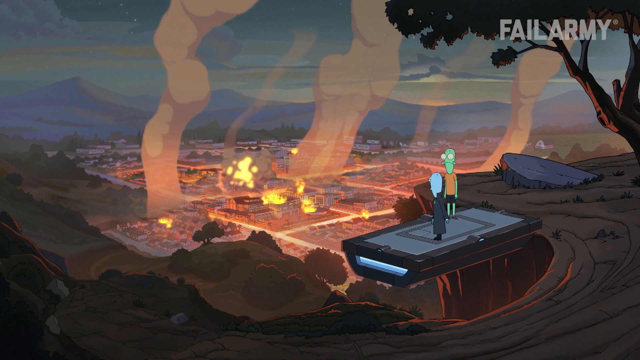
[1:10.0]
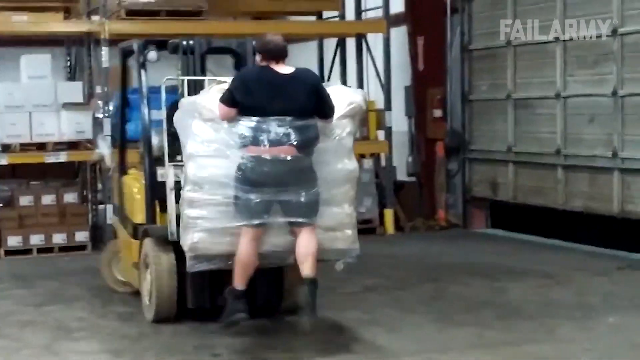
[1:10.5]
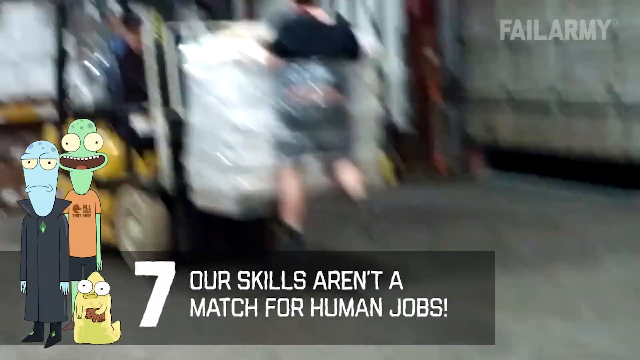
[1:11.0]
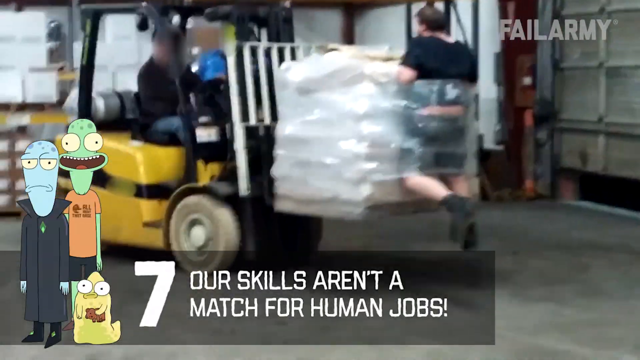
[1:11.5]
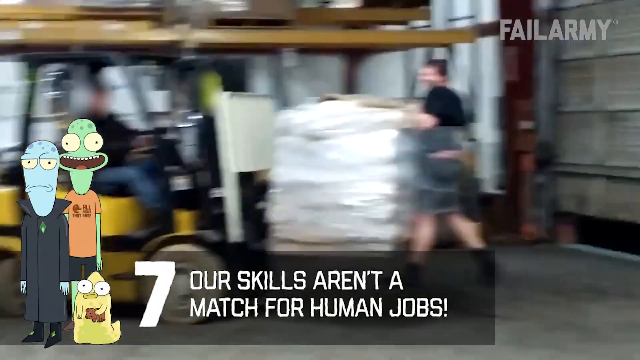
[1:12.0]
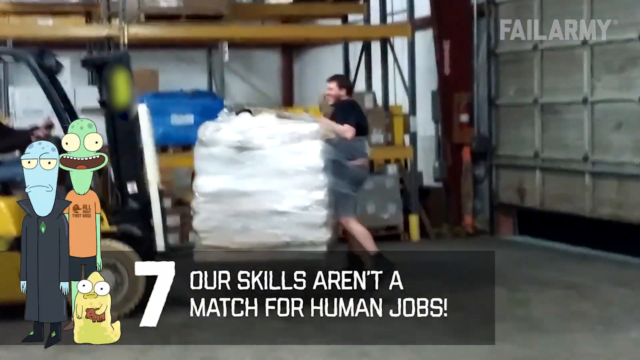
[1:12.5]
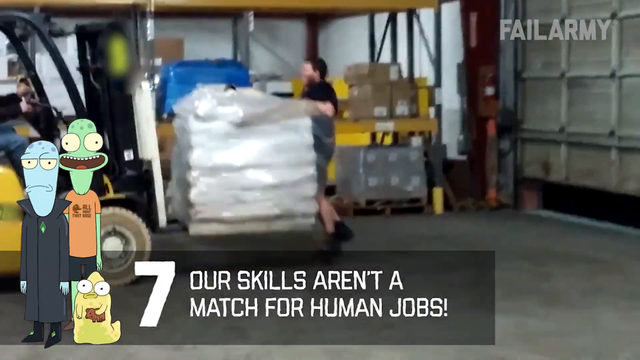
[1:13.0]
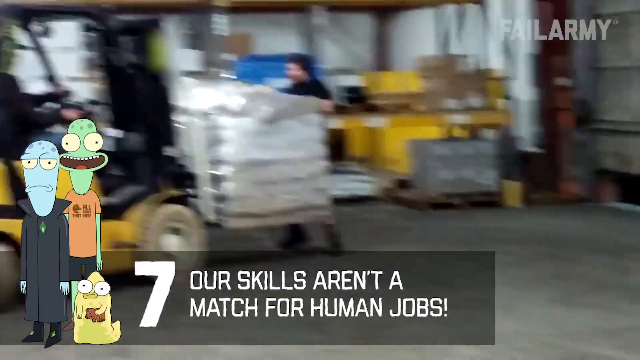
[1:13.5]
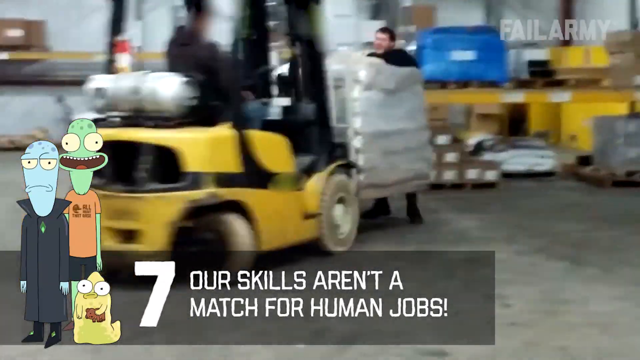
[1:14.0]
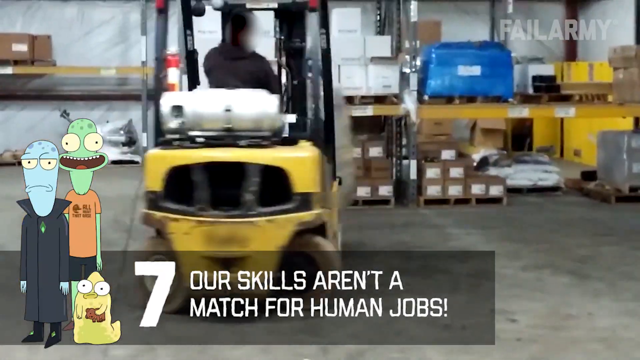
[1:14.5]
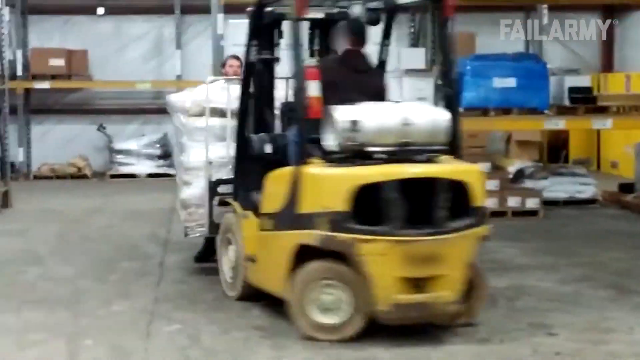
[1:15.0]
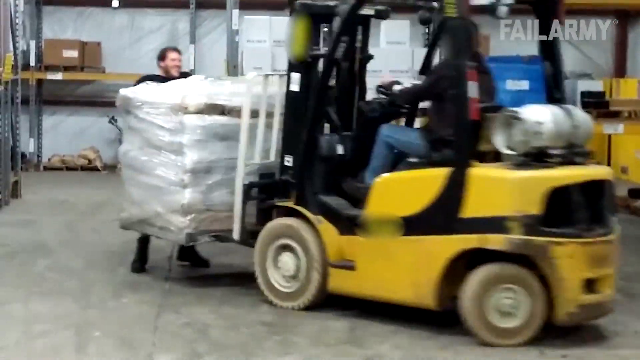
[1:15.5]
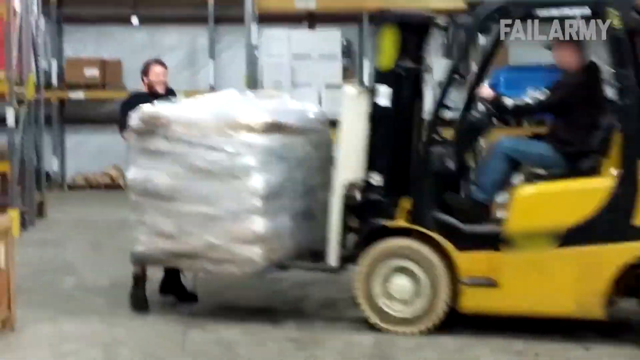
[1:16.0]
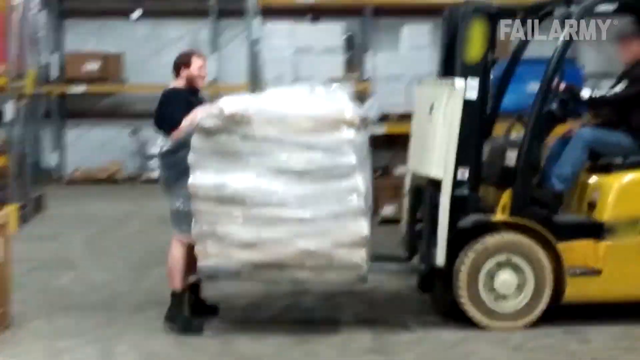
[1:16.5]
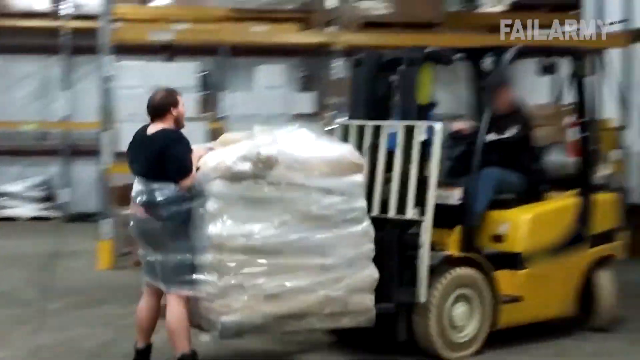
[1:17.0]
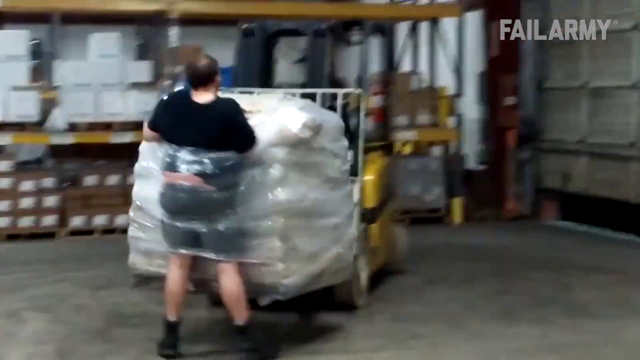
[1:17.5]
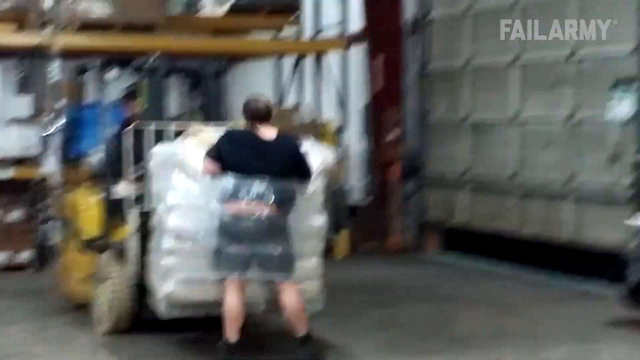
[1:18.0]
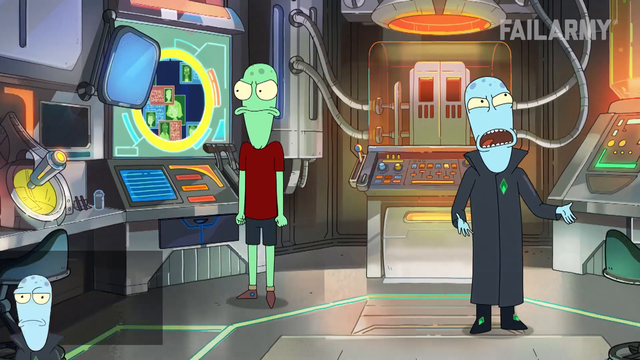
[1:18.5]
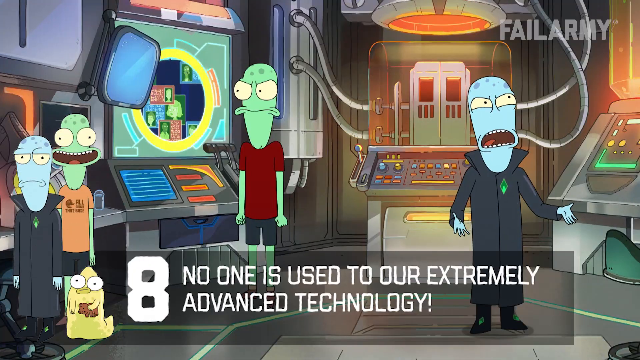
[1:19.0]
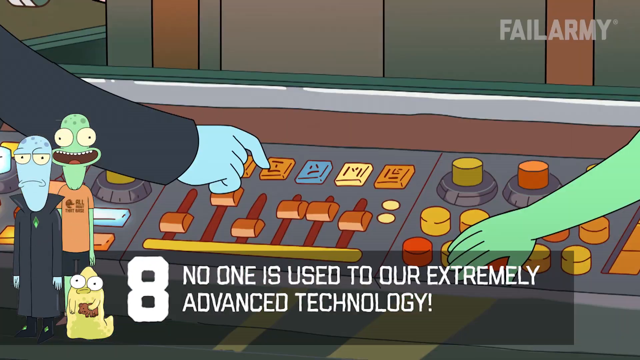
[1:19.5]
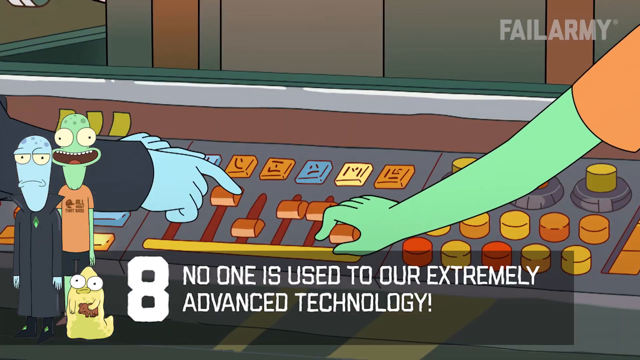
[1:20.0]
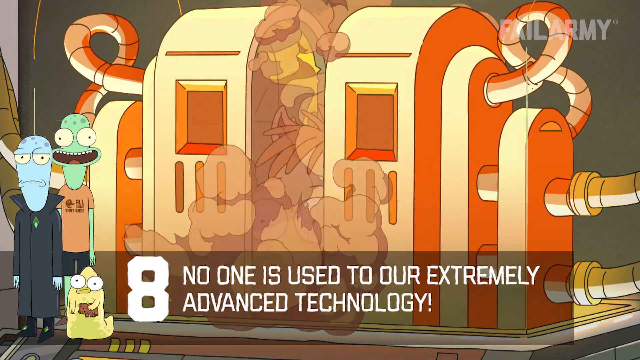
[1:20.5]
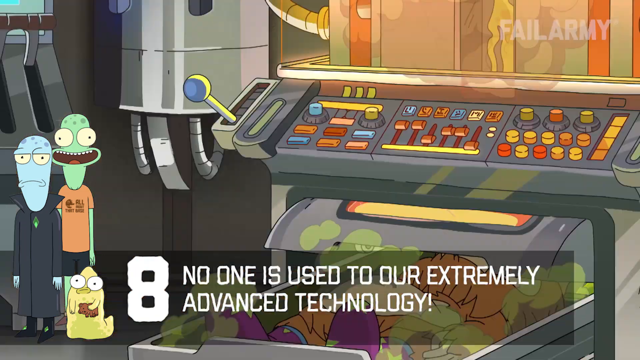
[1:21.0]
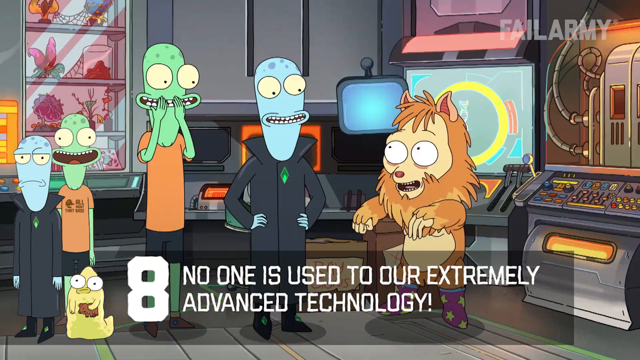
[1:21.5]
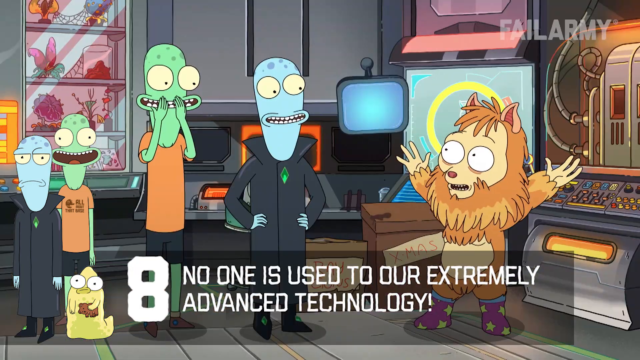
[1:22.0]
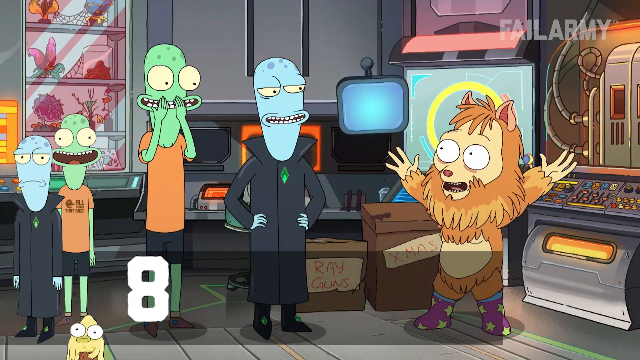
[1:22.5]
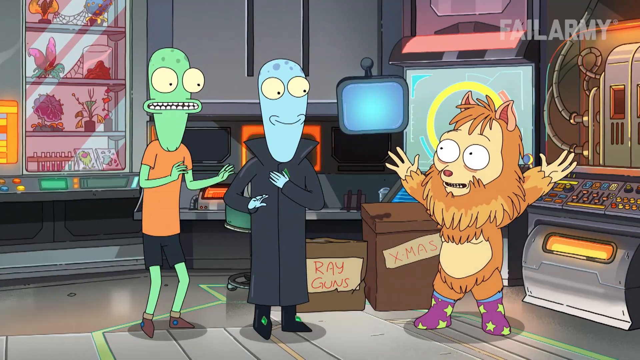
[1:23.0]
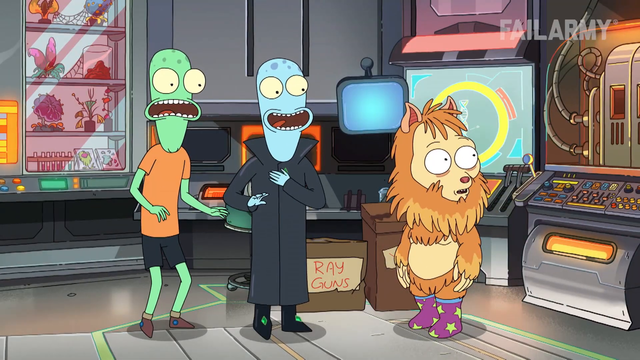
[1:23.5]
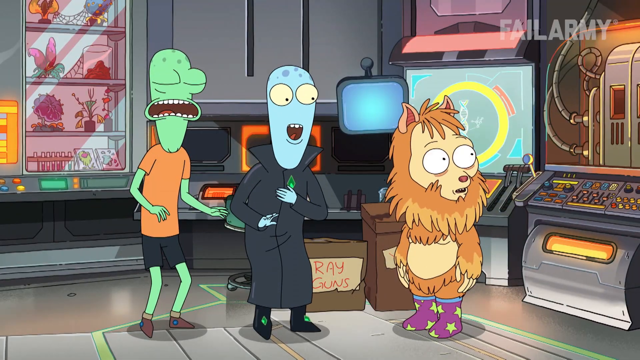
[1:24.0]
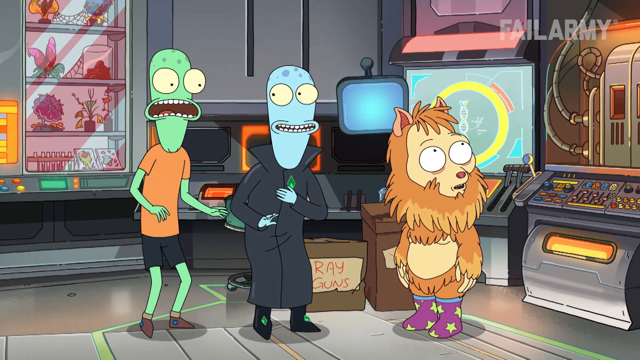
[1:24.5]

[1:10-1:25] A caption about the aliens' skills and human jobs appears. A guy rides on a forklift carrying a pallet with something on it, possibly packages wrapped in cellophane, maybe cement. He stands on the pallet while the forklift driver turns the forklift around in circles. The aliens are back in their control room, and the video cuts back and forth between scenes of an animal character, a lion-like character, popping out of a machine. Text reads "No one is used to our extremely advanced technology." Another scene shows what look like alien cartoon creatures on a rooftop watching a city burn.